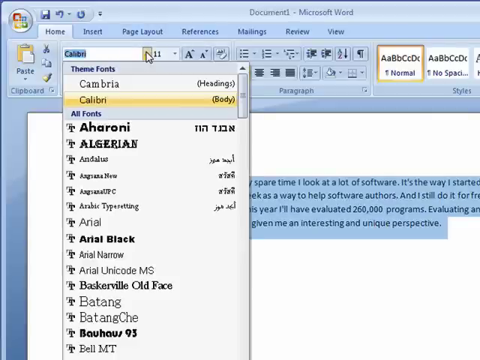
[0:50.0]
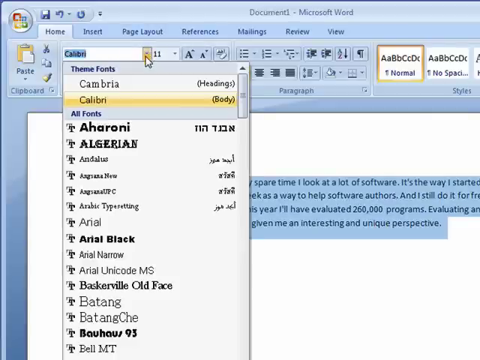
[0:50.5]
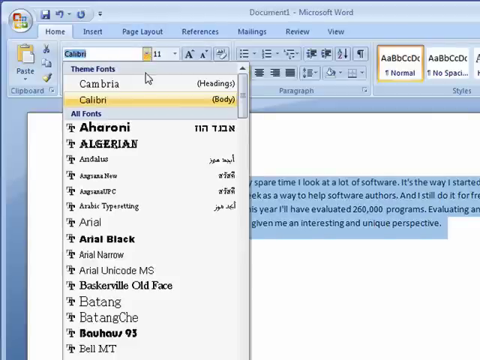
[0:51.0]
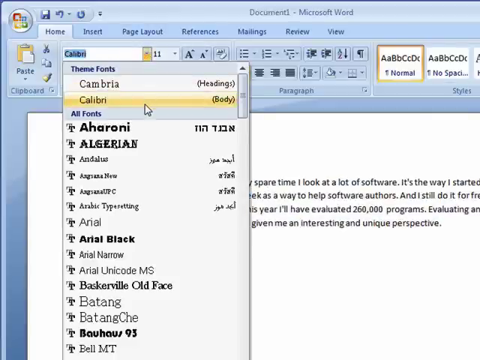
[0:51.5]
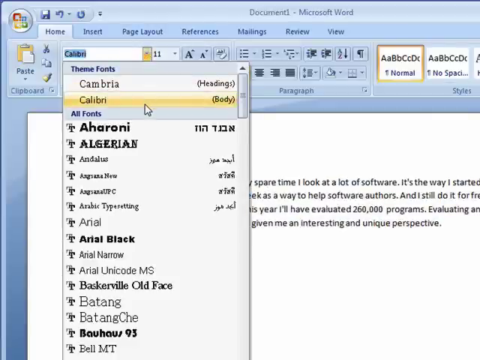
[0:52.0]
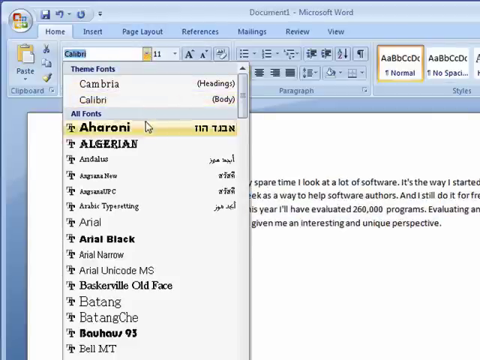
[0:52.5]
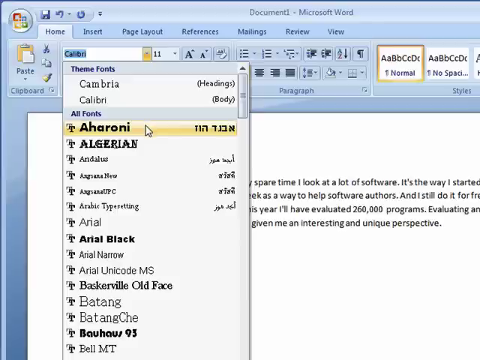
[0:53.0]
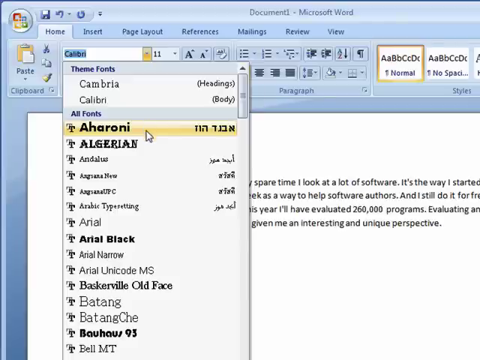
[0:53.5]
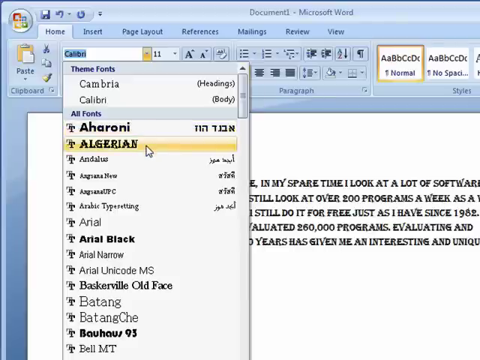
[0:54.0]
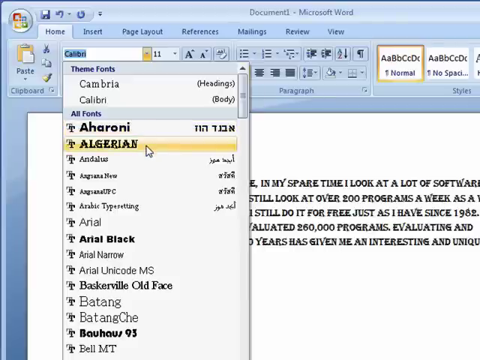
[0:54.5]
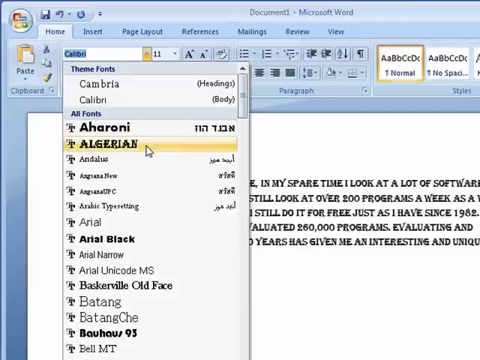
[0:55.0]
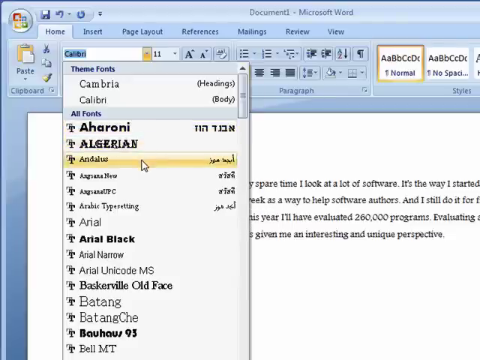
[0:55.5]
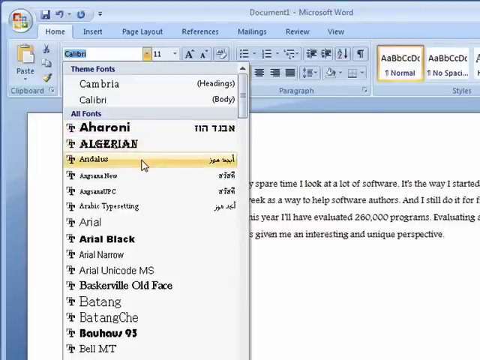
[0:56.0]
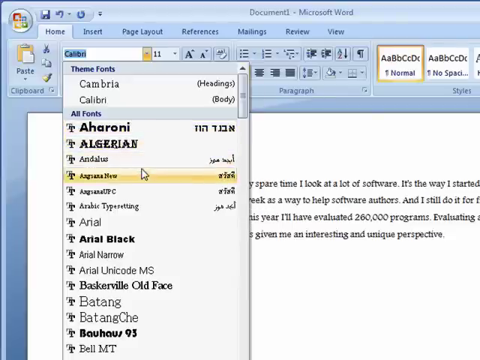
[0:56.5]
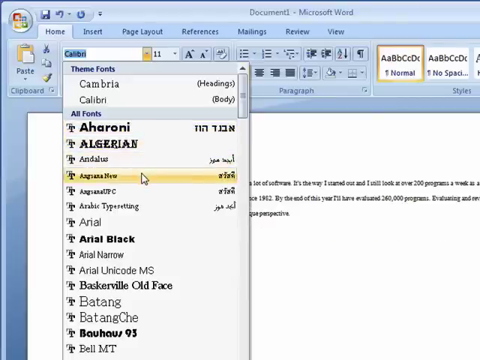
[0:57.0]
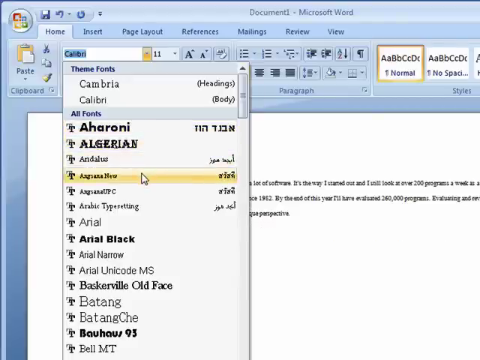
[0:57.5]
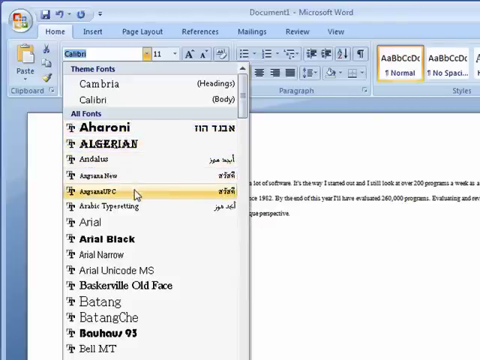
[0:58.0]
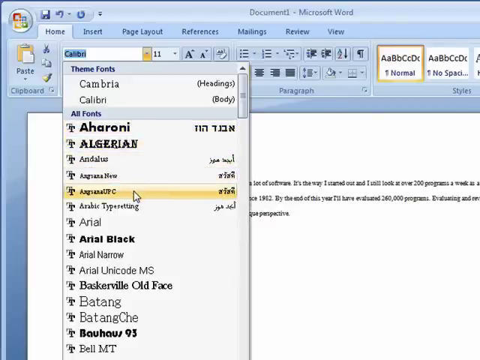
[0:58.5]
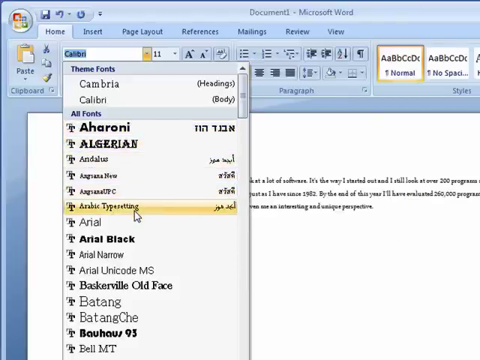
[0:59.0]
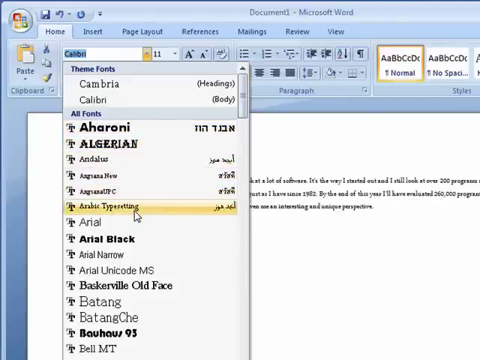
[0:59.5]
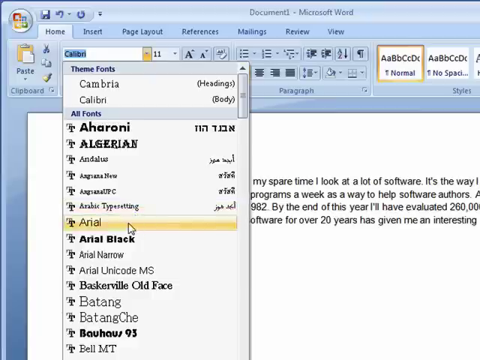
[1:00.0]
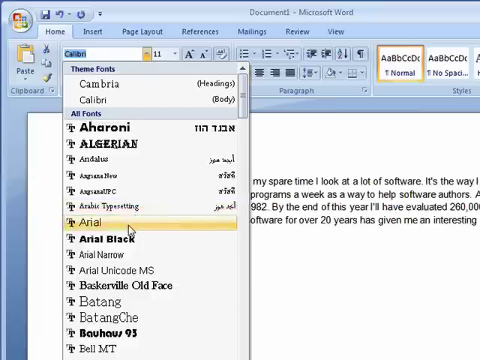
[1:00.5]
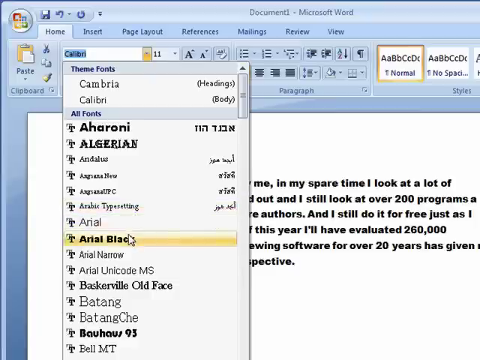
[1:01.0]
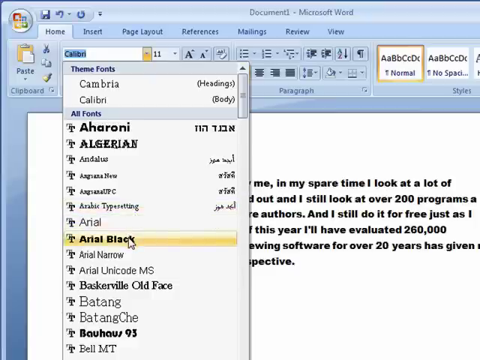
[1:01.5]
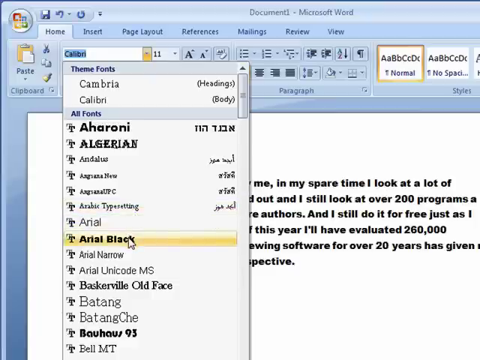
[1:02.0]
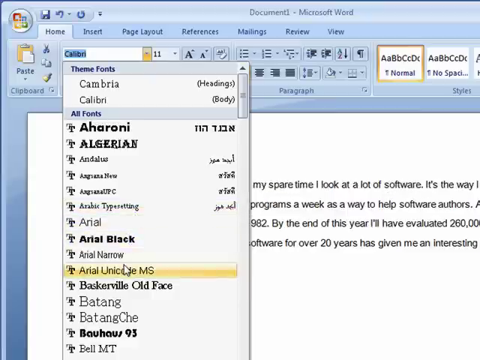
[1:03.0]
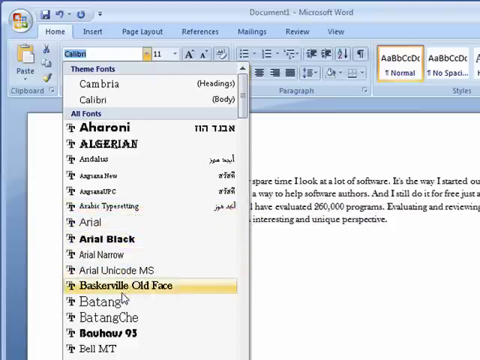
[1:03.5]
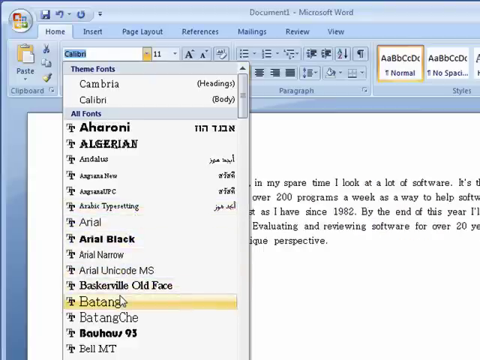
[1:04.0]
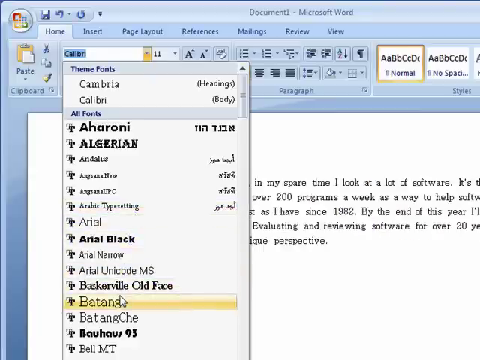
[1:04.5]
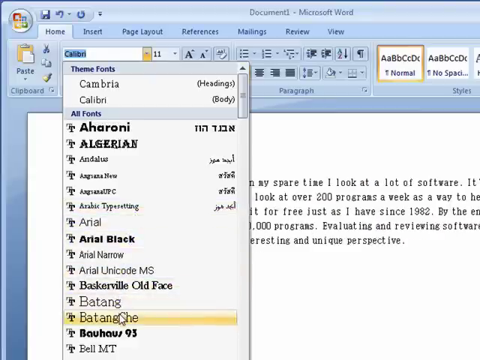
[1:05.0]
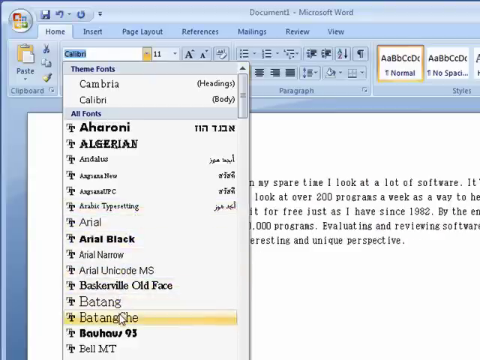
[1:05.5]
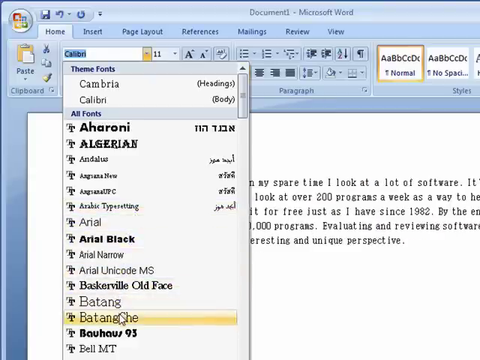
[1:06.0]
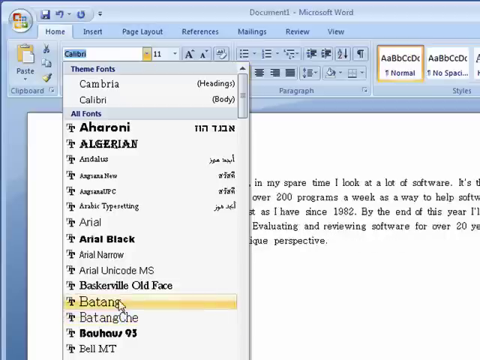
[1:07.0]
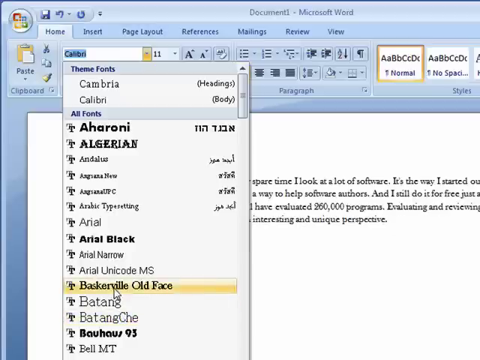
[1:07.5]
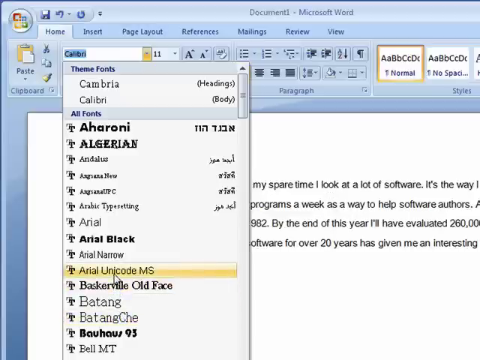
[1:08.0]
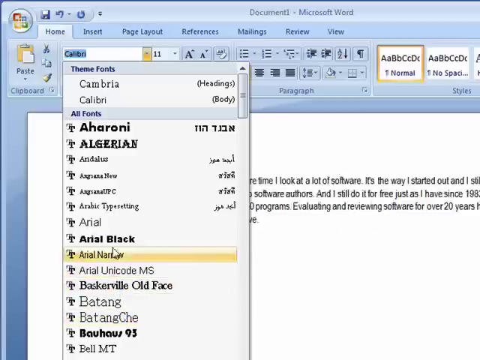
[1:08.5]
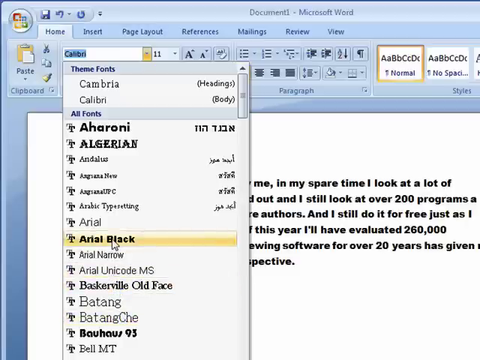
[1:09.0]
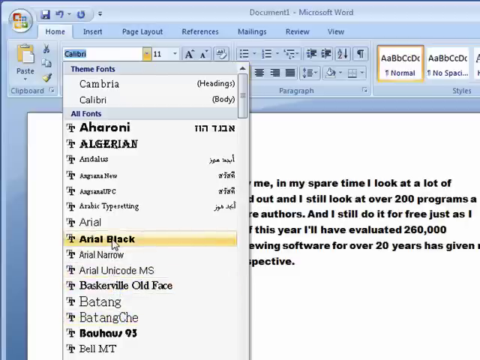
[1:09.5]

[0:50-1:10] With the whole paragraph selected, the man scrolls relatively slowly through the font types, only reaching those starting with A and B out of many fonts. As he goes, the design and look of the text in the selected paragraph changes on the screen with each font.